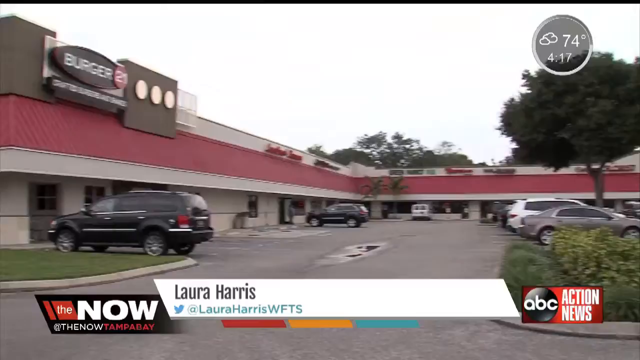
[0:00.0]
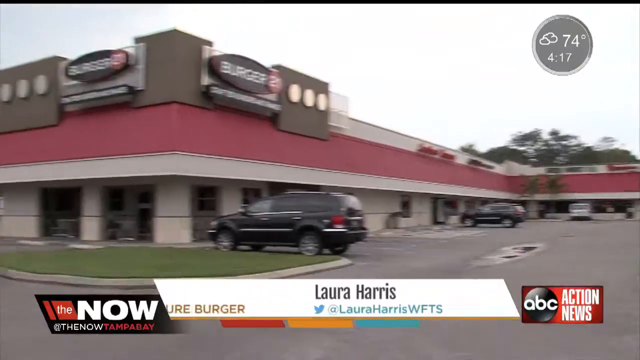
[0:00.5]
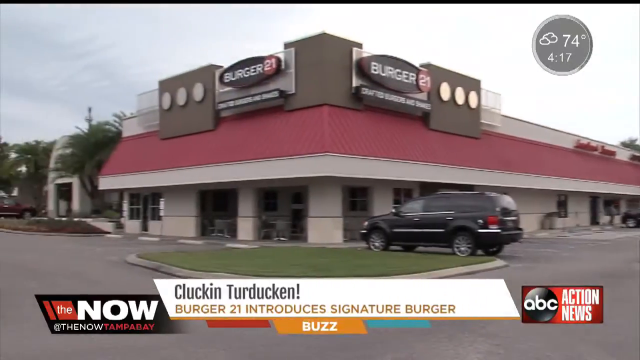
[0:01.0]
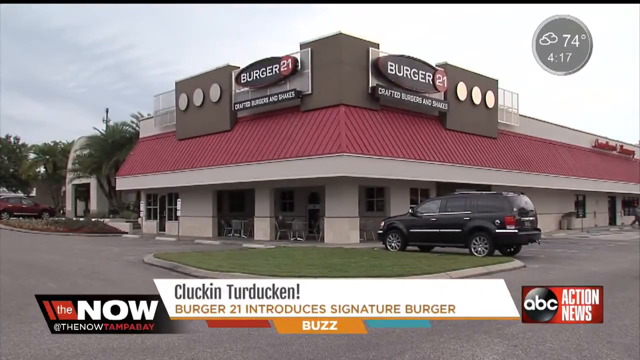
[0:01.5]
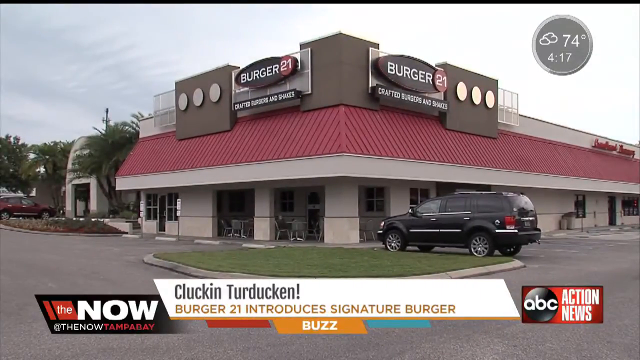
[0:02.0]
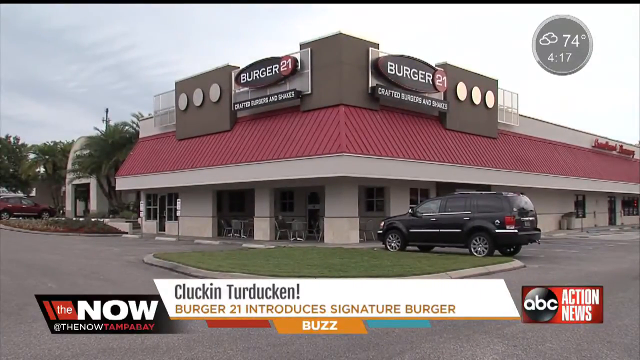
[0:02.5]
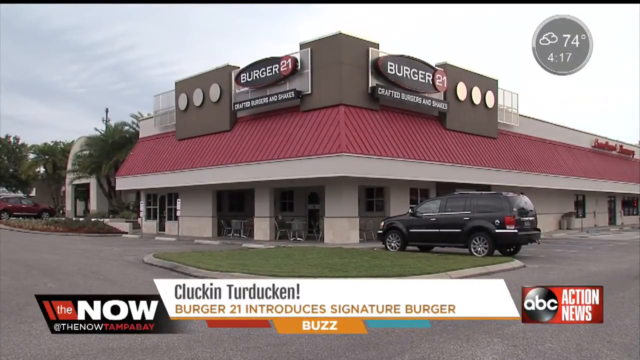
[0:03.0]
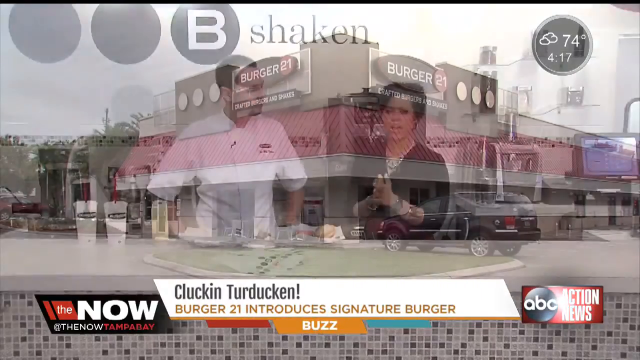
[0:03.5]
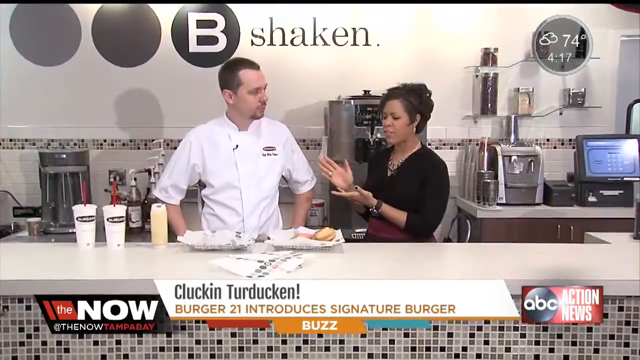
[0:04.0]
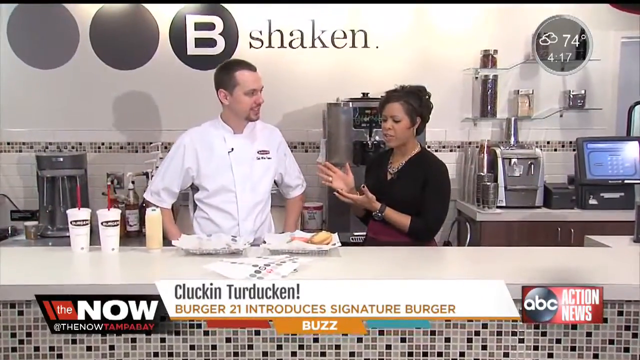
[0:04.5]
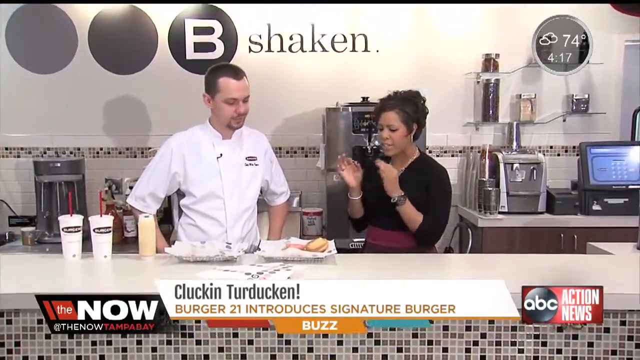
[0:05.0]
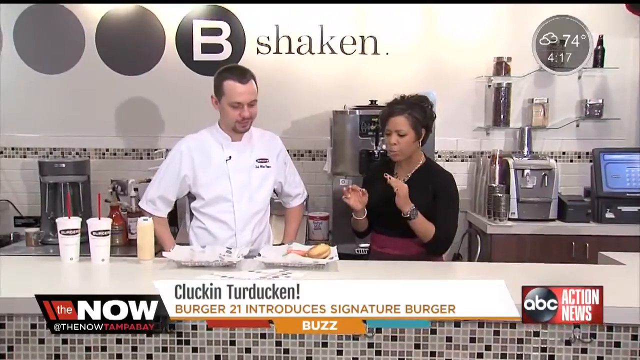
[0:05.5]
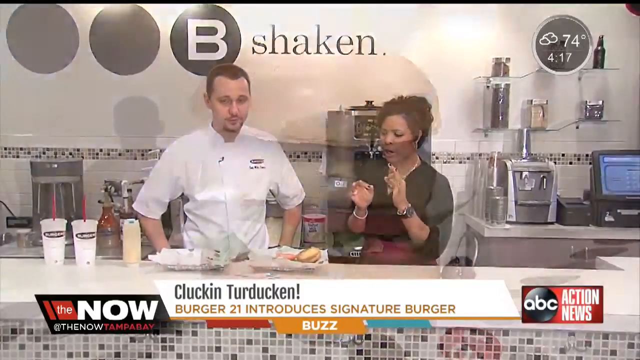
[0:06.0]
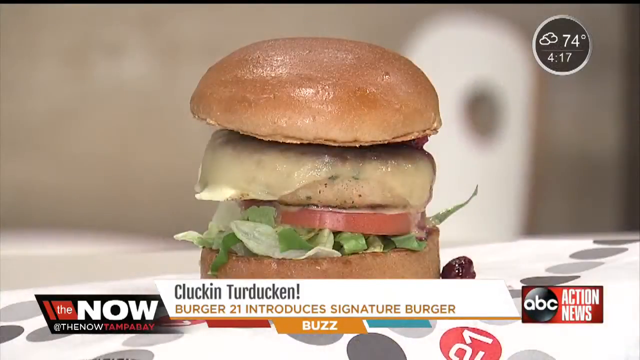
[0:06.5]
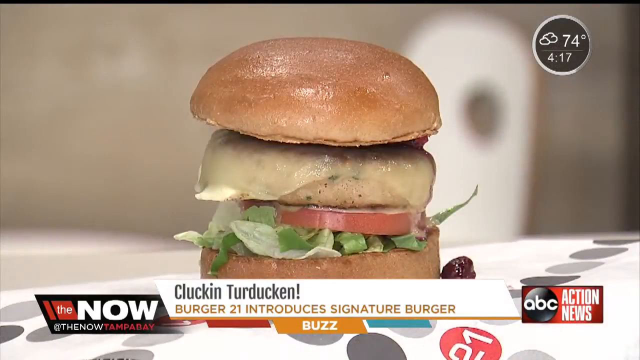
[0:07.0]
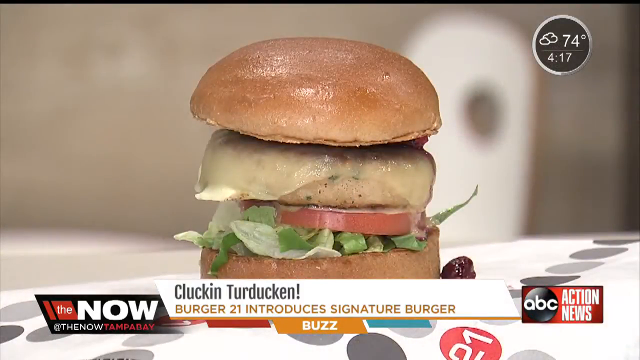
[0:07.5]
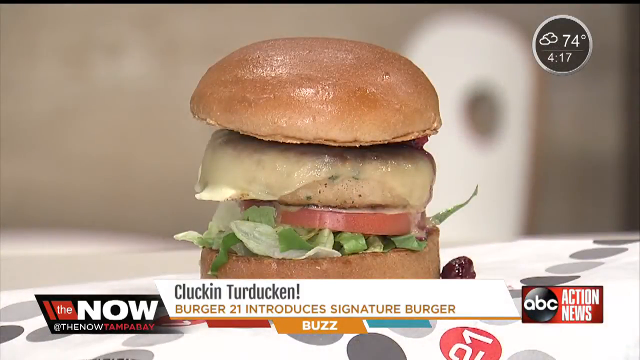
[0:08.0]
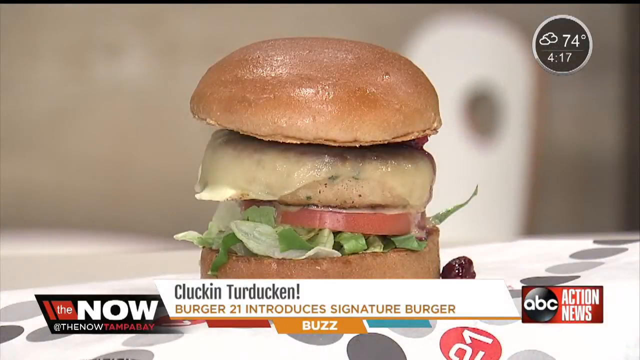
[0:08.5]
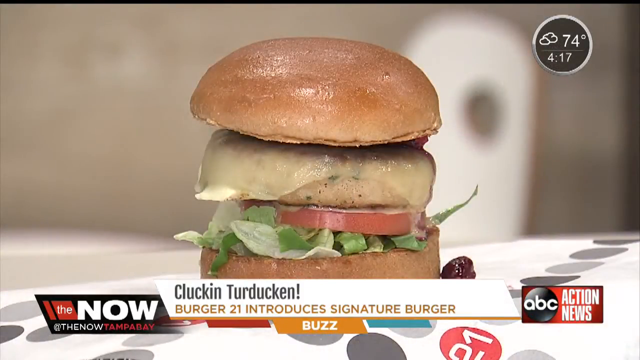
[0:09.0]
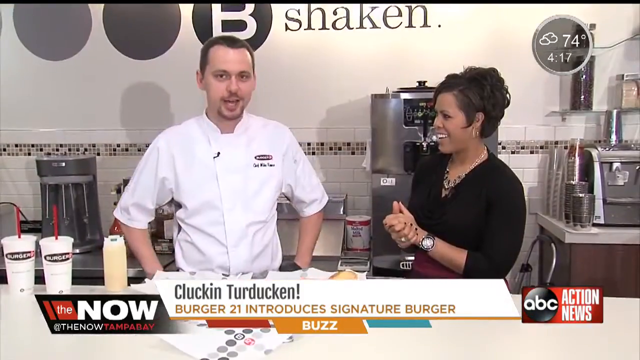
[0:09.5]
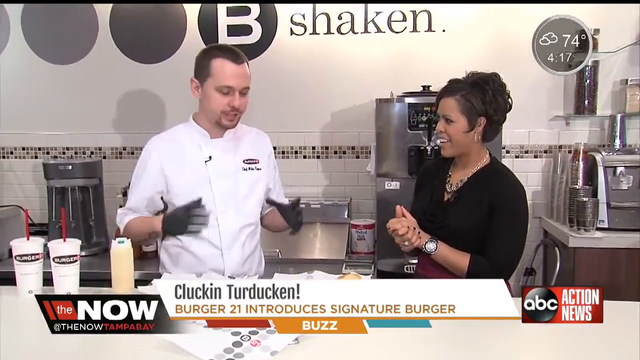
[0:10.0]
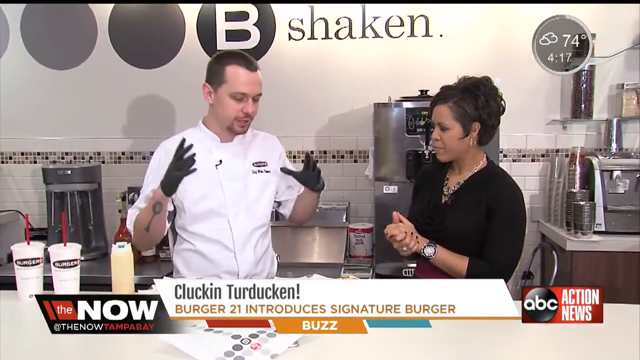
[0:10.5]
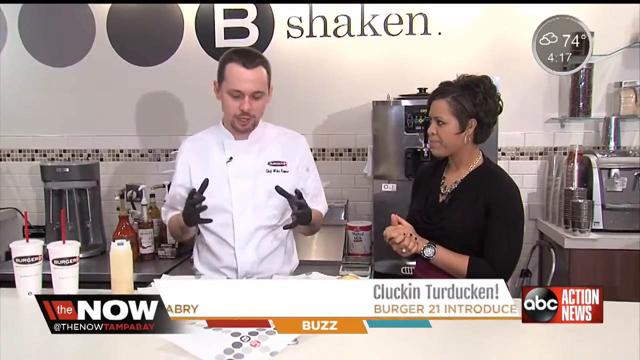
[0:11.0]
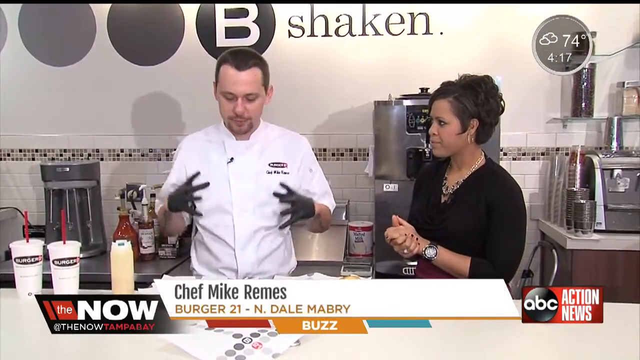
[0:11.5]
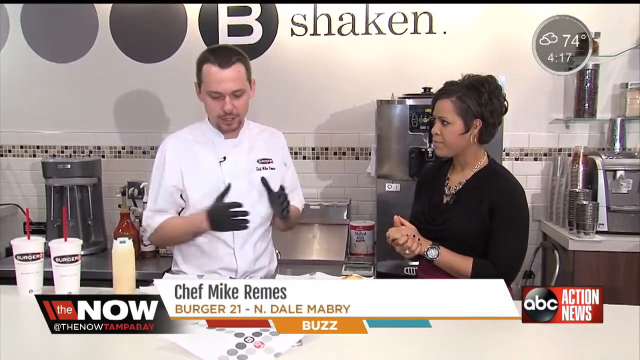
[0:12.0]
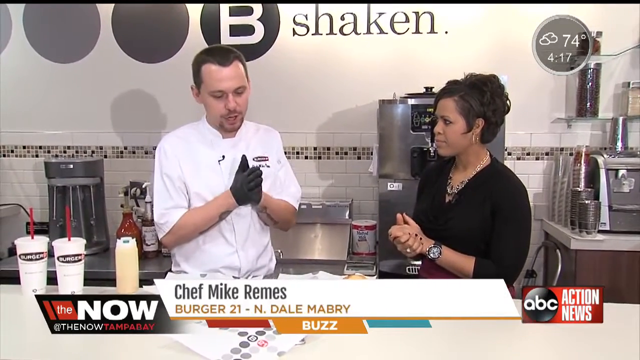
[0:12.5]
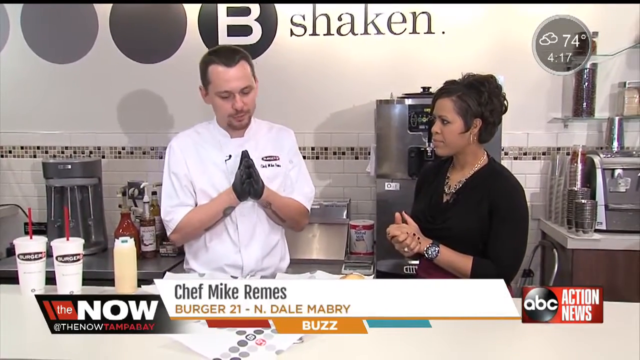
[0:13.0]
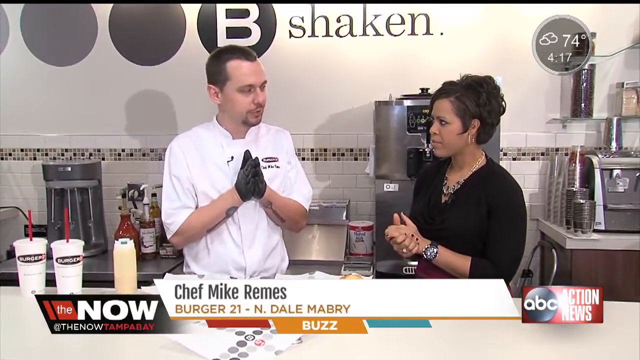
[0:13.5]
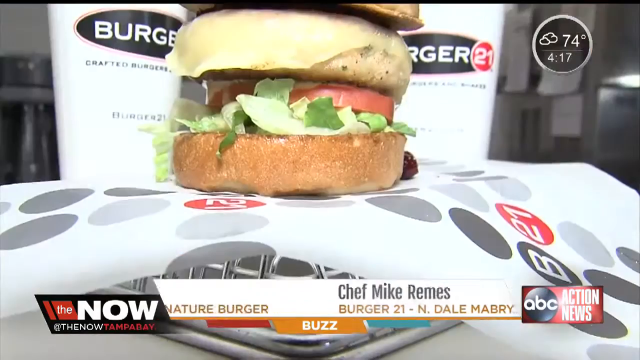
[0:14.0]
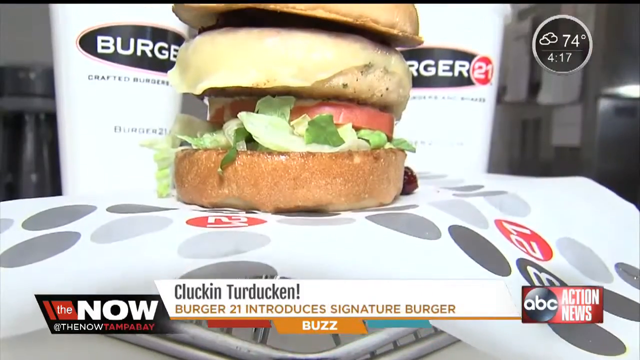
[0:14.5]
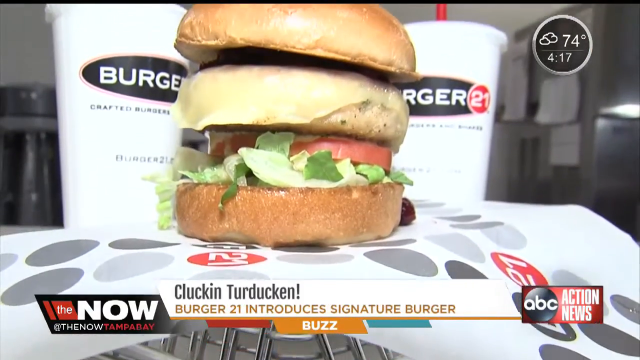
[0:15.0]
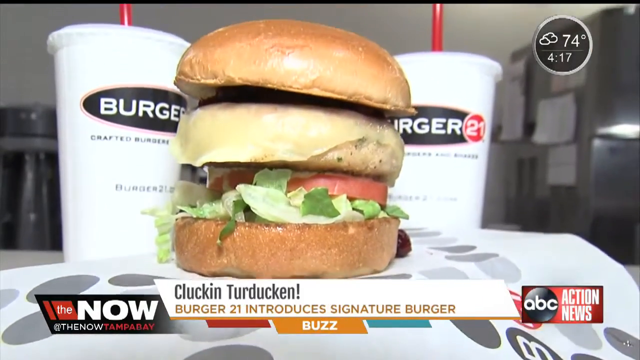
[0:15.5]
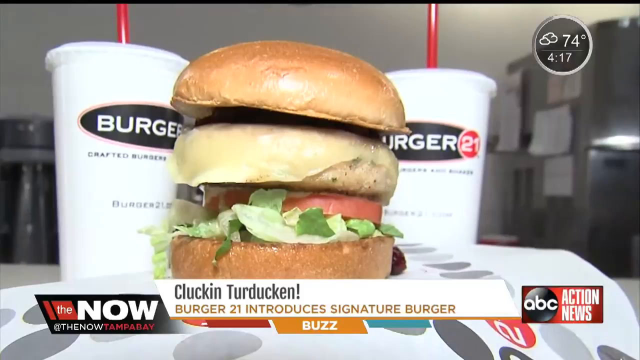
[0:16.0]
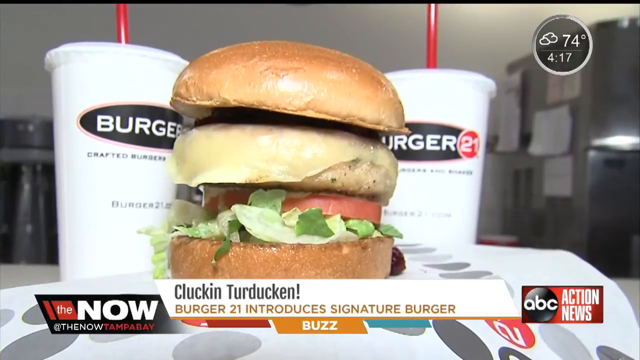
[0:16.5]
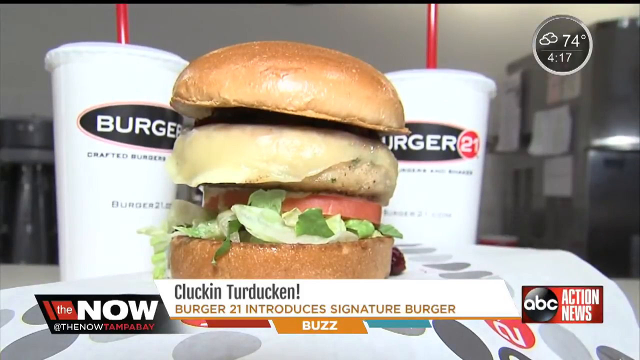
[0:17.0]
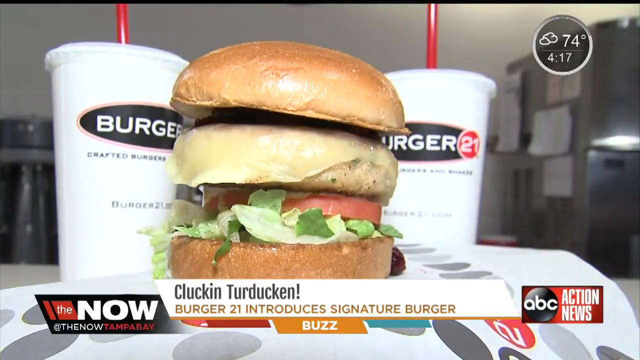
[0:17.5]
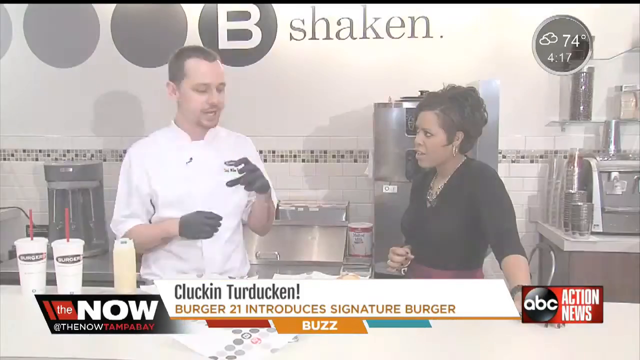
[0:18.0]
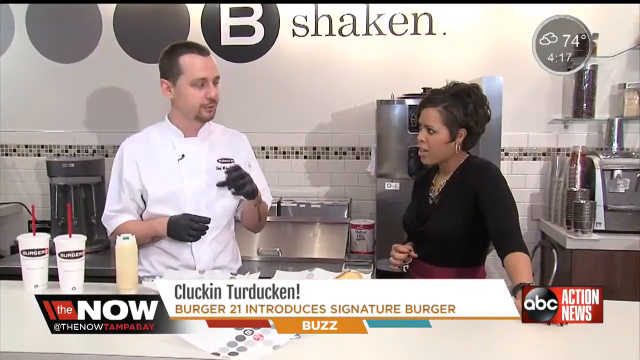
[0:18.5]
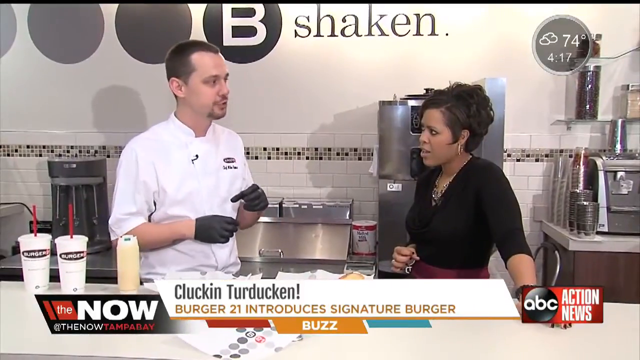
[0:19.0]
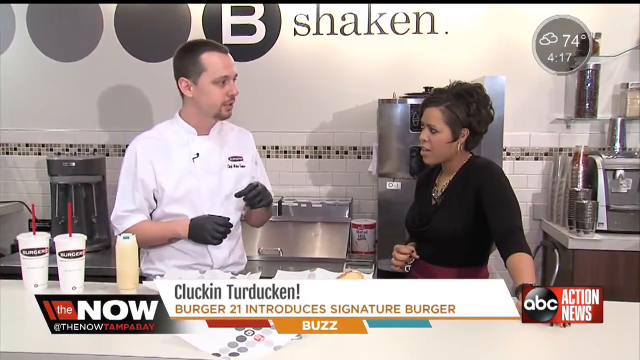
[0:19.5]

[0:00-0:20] The video is from a news channel called abc Action News. At the top right of the screen there is a circle with "74 degrees Celsius" written inside, and the time is 4.17. At the bottom left is written "the now", and underneath it "at the now". Next to this is the name "Laura Harris", with a Twitter handle underneath reading "at Laura Harris, WFTS". Cars are outside a restaurant called Burger 21. A heading says "Clucking Turducken", and underneath it is written "Burger 21, introduces signature burger". A lady is standing with a man; she wears a black top and has brown hair, and the man wears chef attire. A burger is shown, and the chef explains something to the lady. The chef's name is given as "Chef Mike Ramesh", with "Burger 21-N. Dale Mabry" written underneath. Behind them there is kitchen equipment.